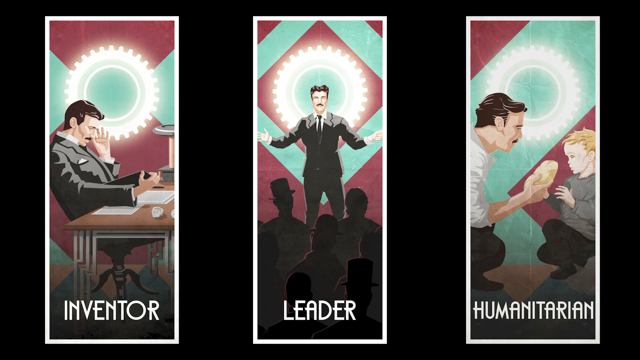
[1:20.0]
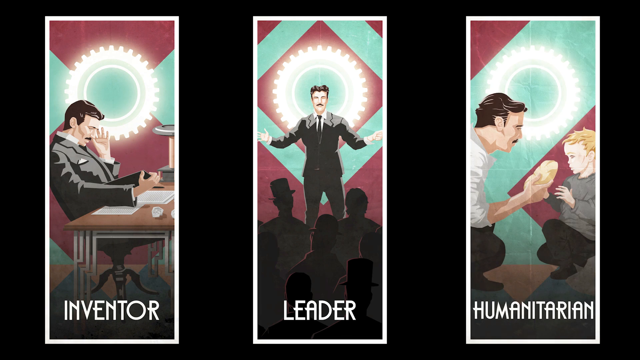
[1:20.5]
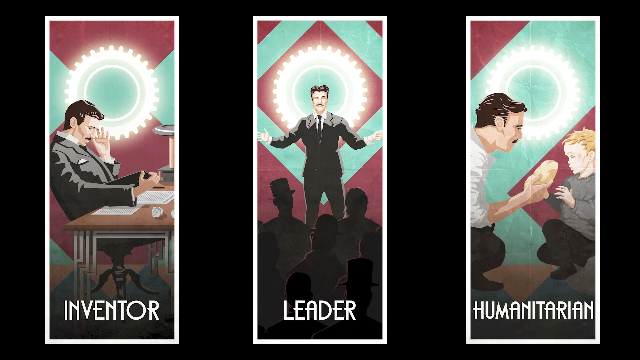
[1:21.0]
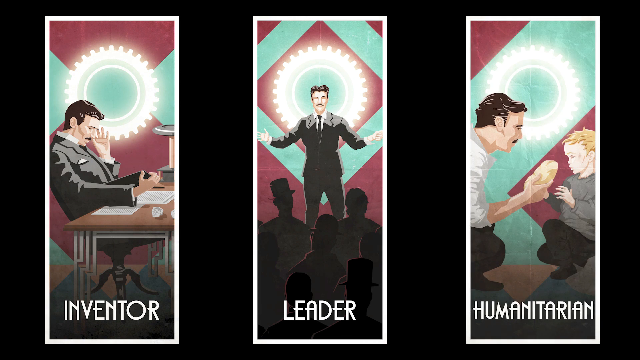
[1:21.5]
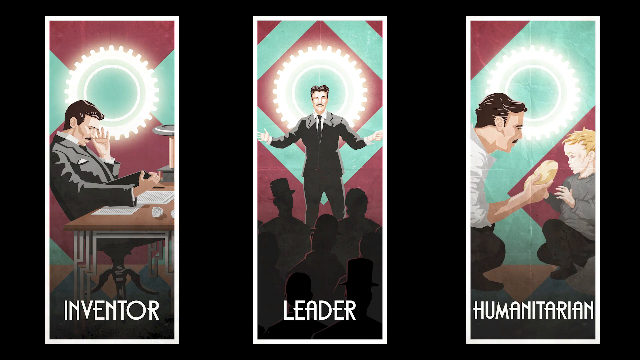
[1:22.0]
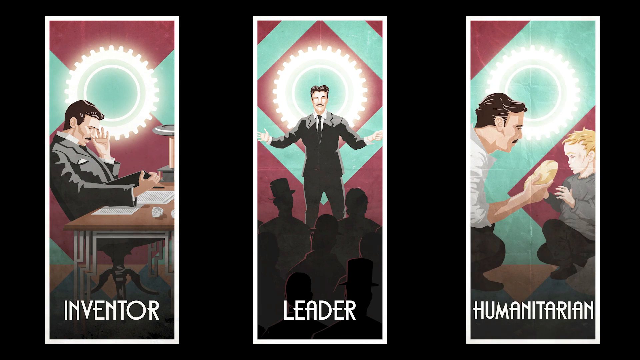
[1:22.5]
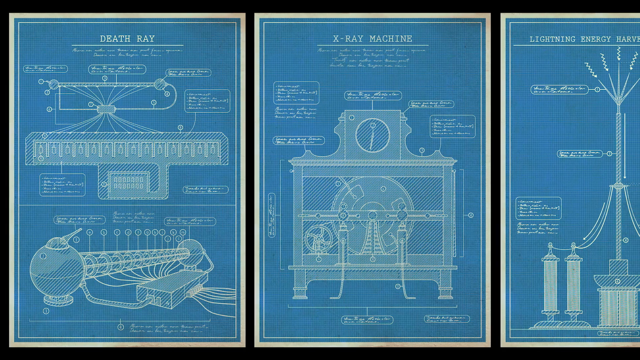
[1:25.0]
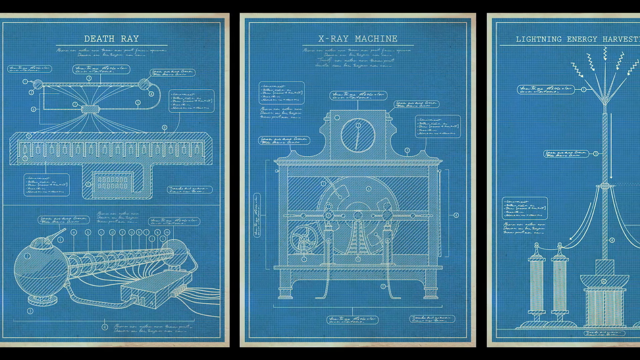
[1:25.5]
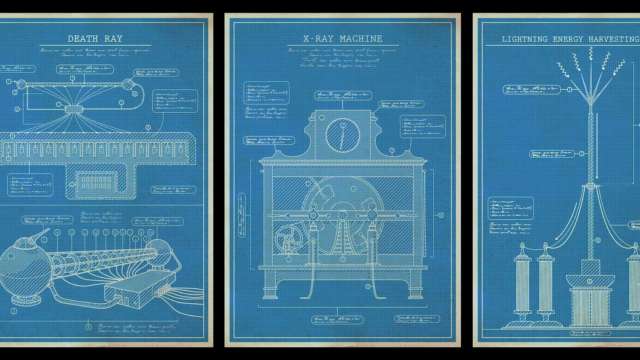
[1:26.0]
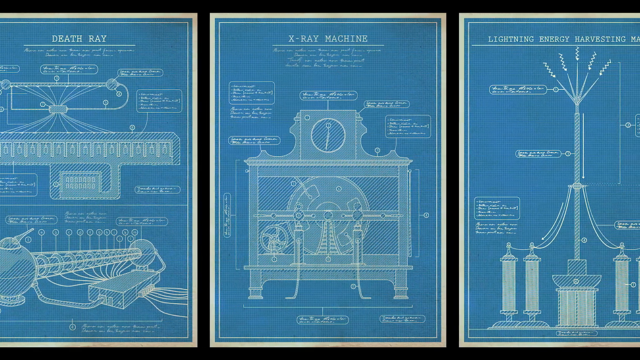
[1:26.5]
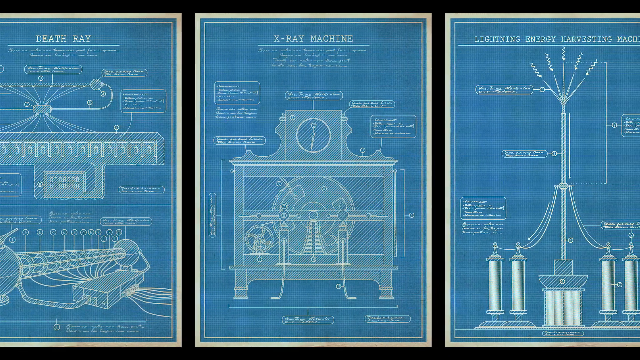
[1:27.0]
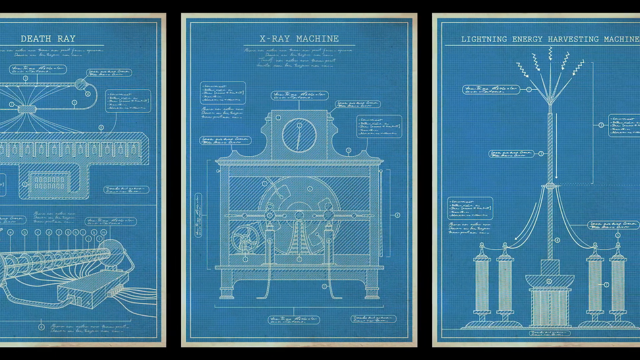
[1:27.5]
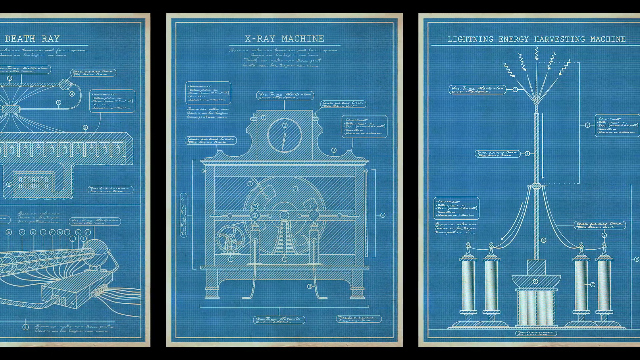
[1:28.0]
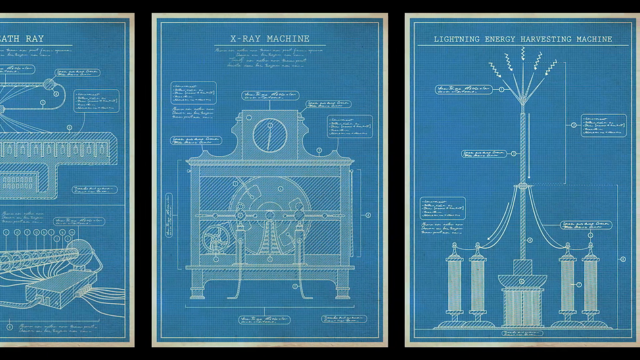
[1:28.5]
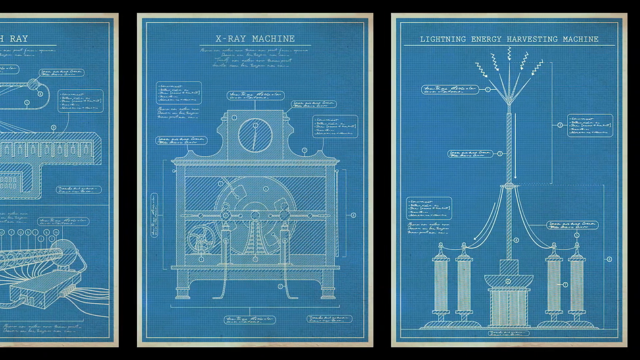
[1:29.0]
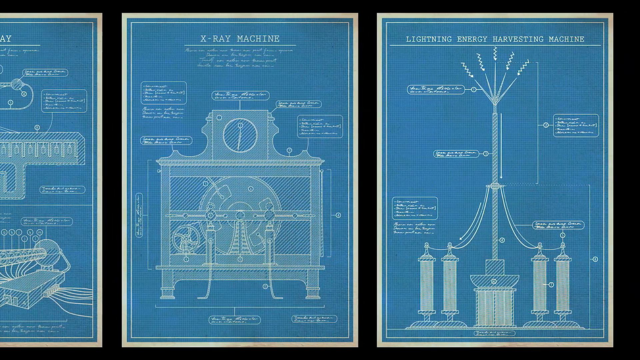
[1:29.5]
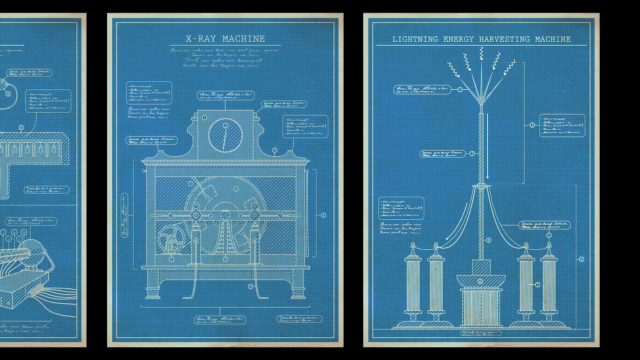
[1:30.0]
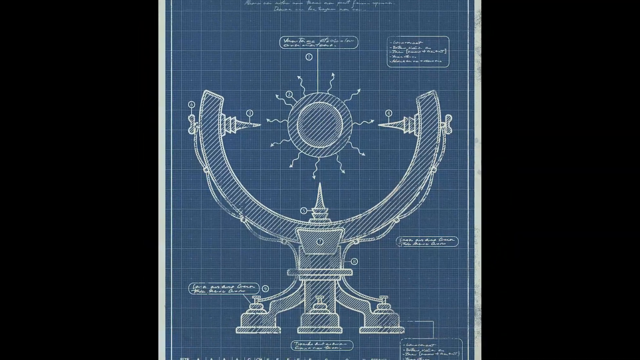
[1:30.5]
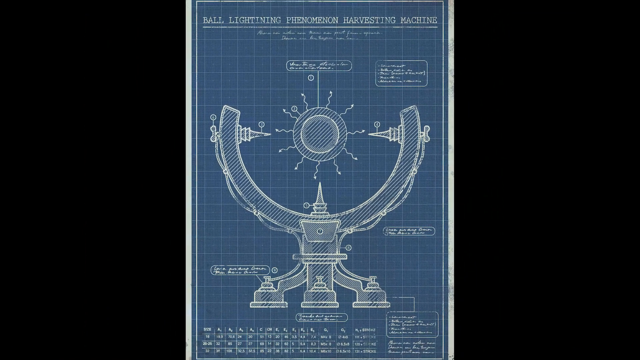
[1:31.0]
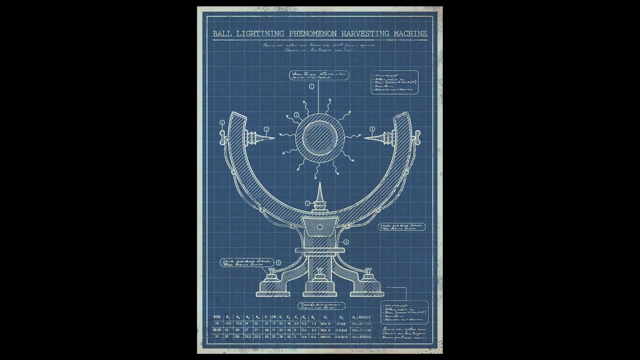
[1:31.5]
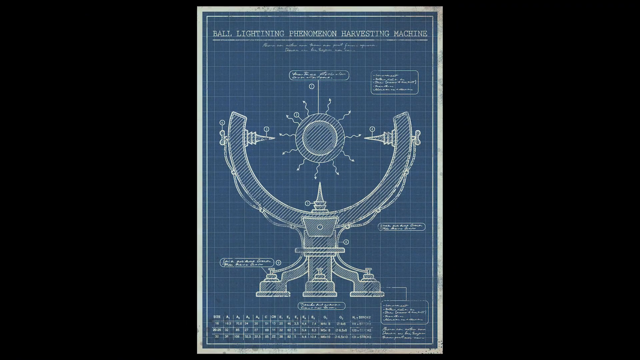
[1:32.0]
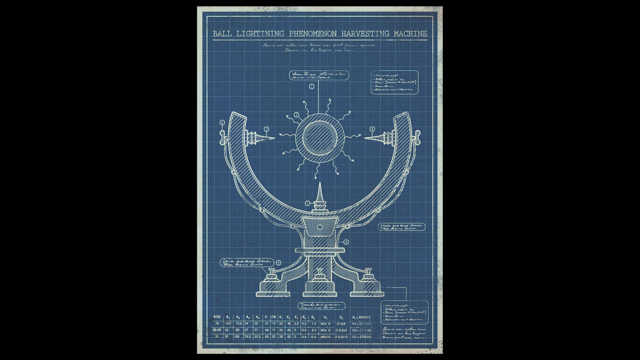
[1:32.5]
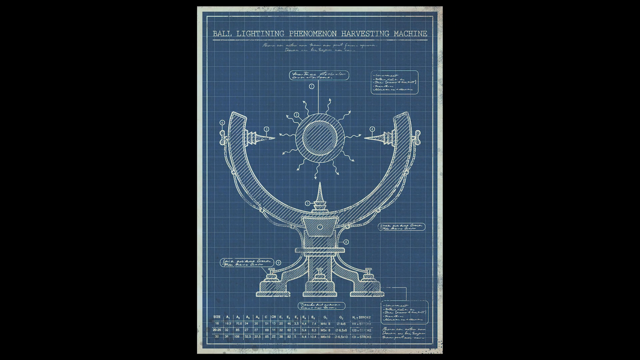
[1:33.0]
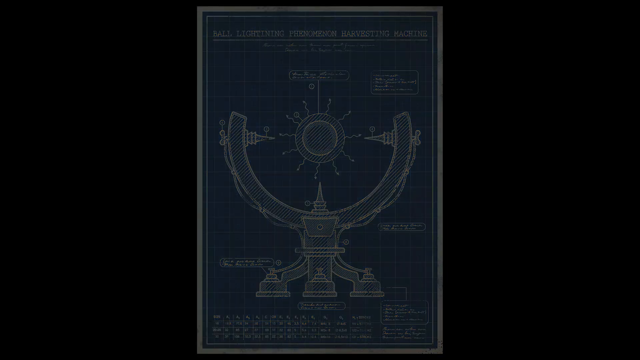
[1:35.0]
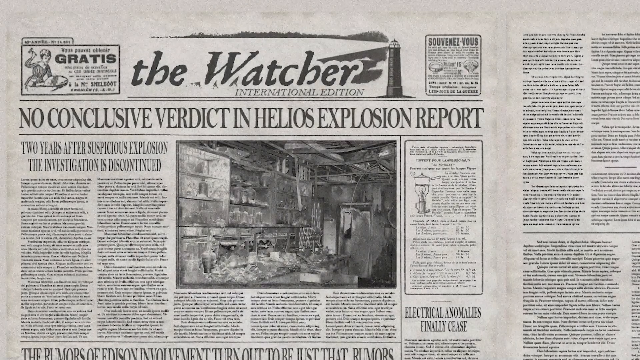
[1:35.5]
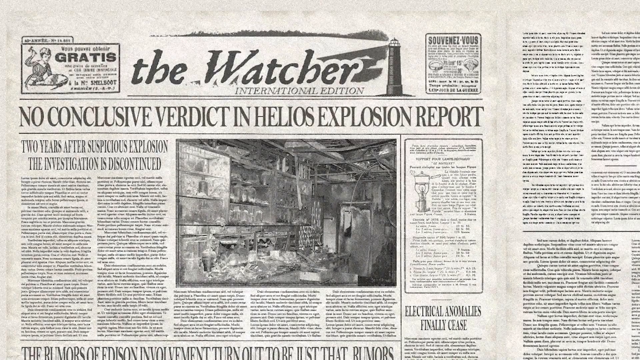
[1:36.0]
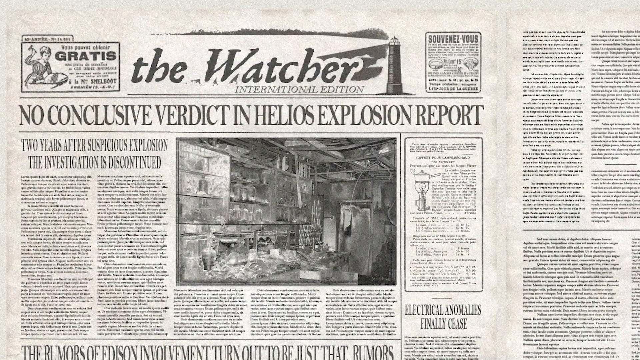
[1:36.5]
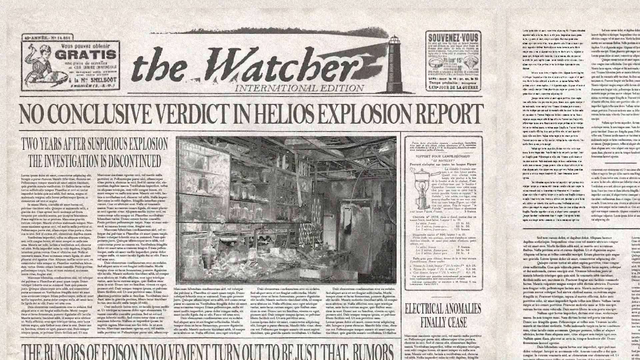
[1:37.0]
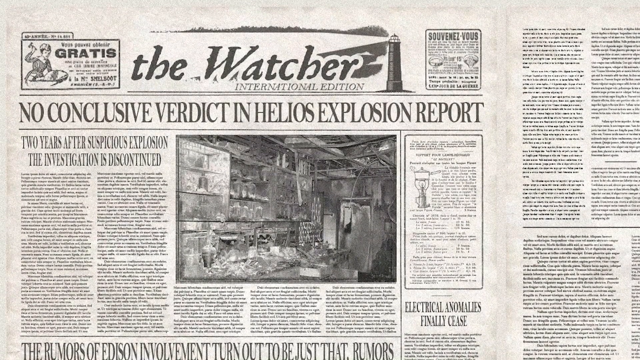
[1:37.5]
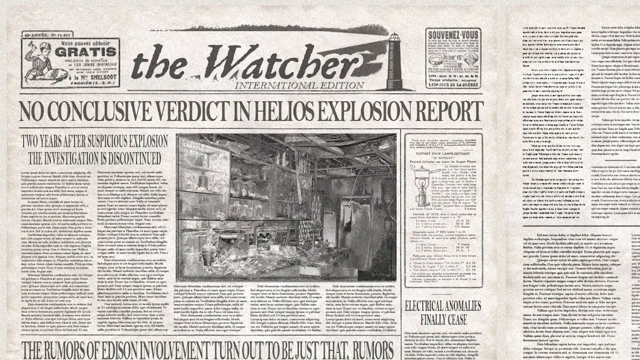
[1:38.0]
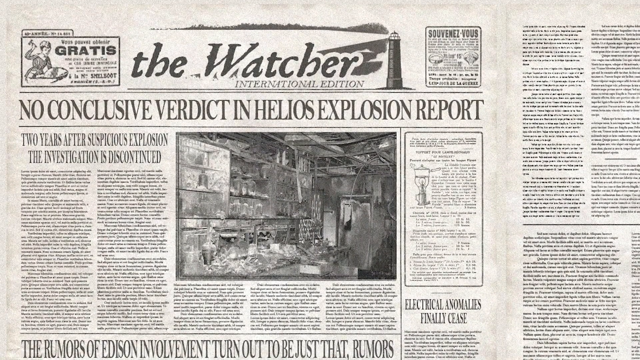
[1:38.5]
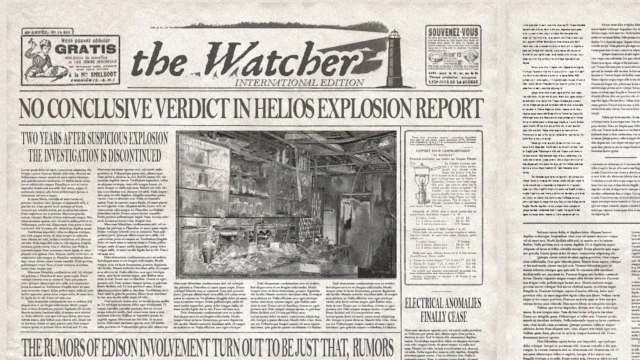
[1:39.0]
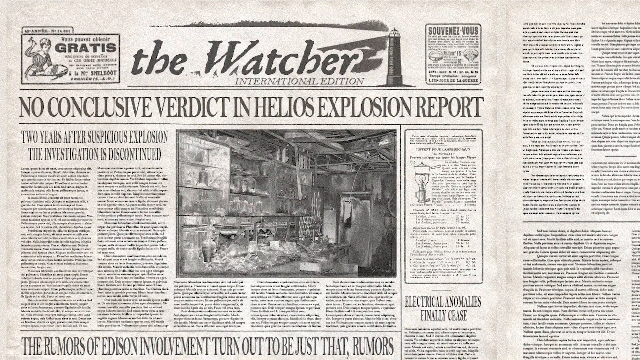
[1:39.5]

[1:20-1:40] A black screen shows three evenly spaced pictures that are taller than they are wide. They appear to show the same man in all three, who is not a human man, doing different things. In the first, there is what looks like a tire but is a light, against a turquoise and red wall; the man, in a suit, sits at a desk, looks like he is reading something, and has his hand against his head. The word "inventor" is under it. In the second, the same man stands in front of the tire light and the turquoise and red wall, still in a suit, with his hands open, standing in front of a crowd of people; it says "leader". In the third, the man still wears the suit but no longer has the jacket or tie; he is still in front of the turquoise and red wall with the light, but is now kind of kneeled down, giving a child a piece of bread, with "humanitarian" under it.